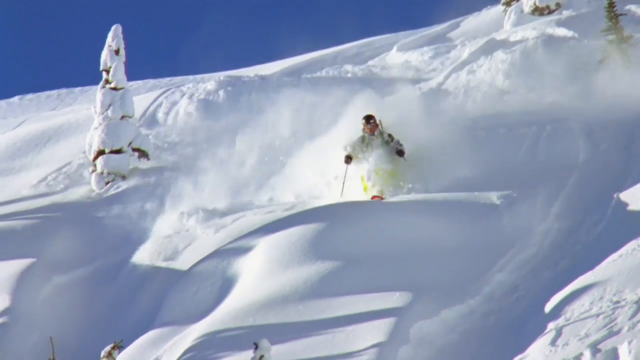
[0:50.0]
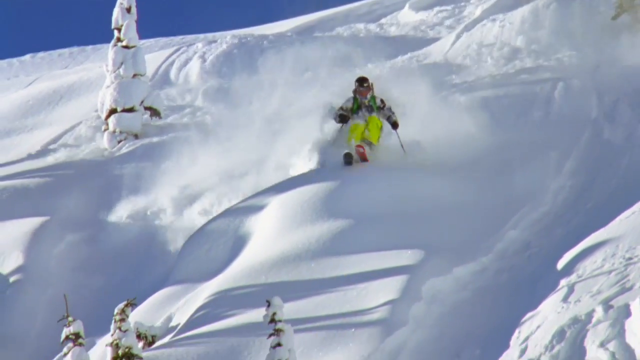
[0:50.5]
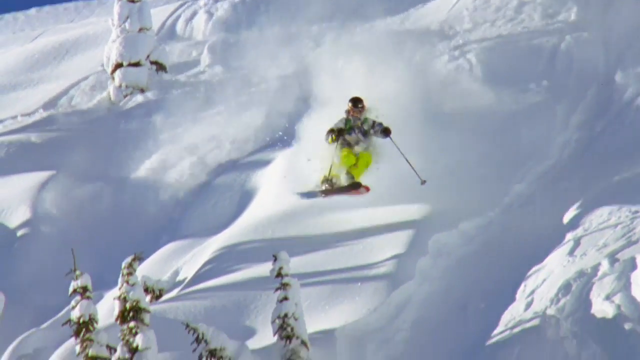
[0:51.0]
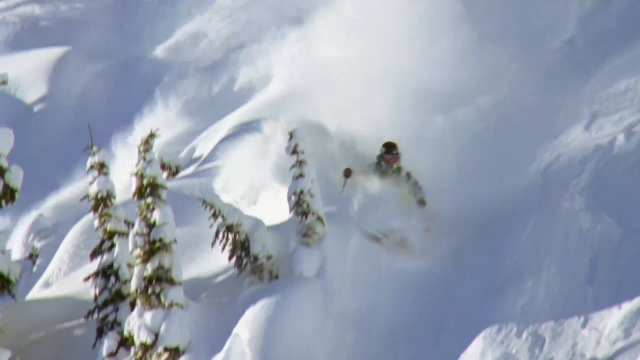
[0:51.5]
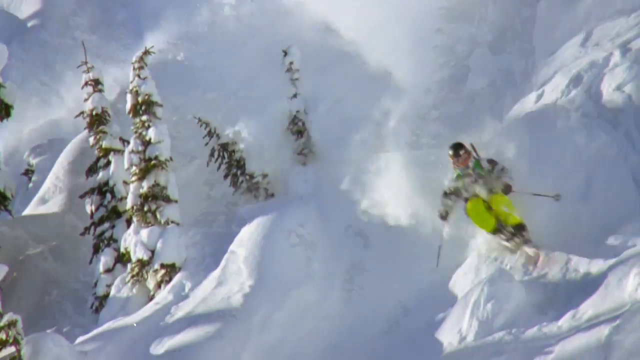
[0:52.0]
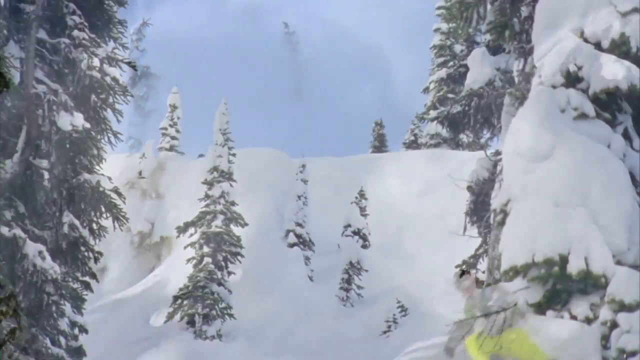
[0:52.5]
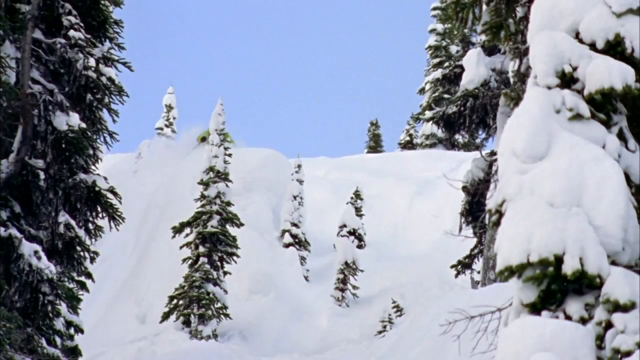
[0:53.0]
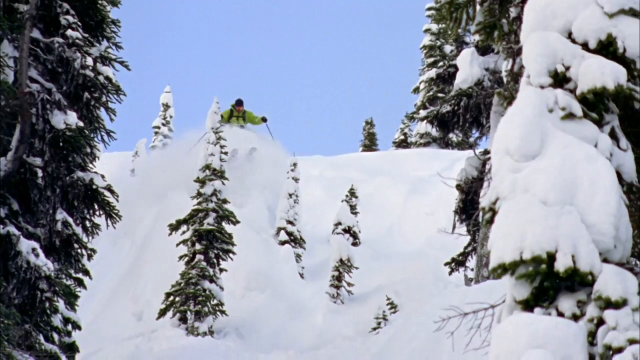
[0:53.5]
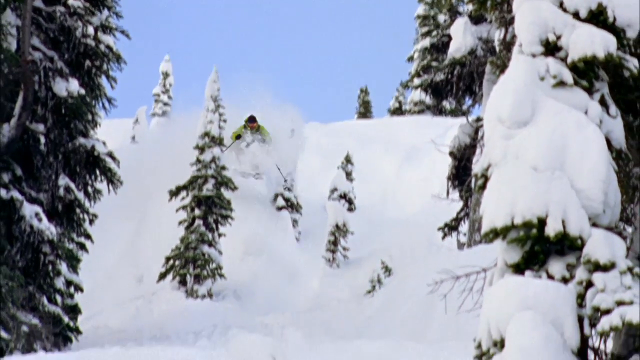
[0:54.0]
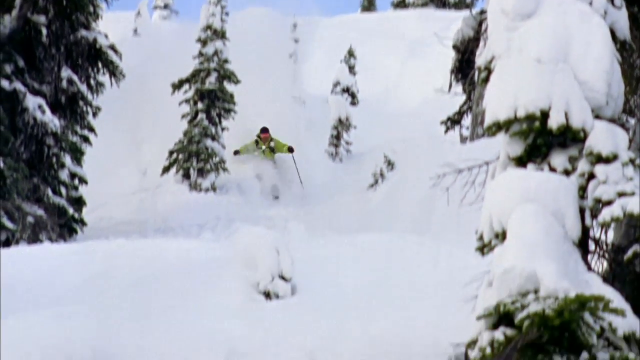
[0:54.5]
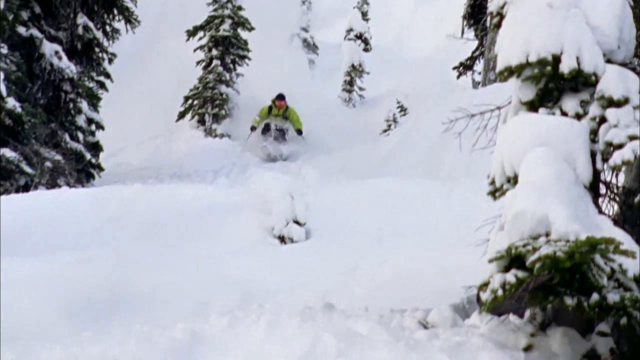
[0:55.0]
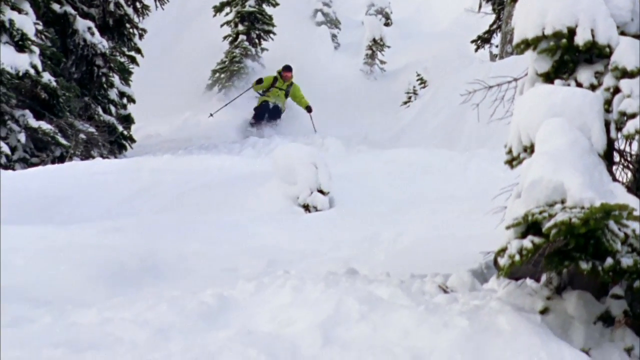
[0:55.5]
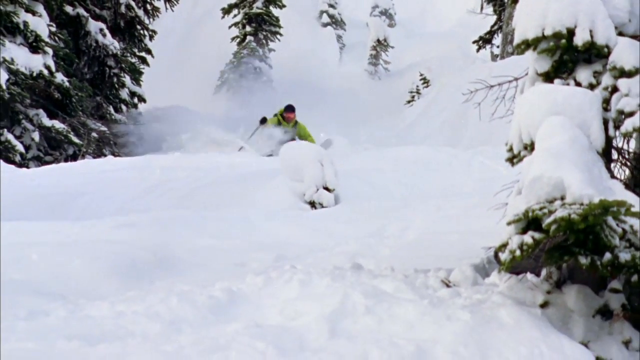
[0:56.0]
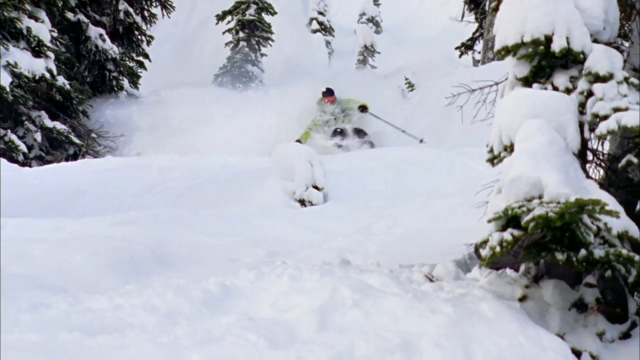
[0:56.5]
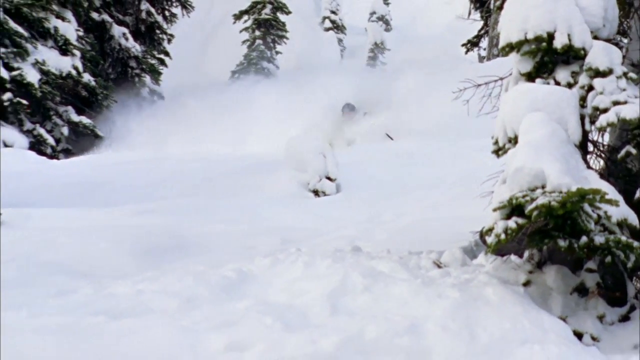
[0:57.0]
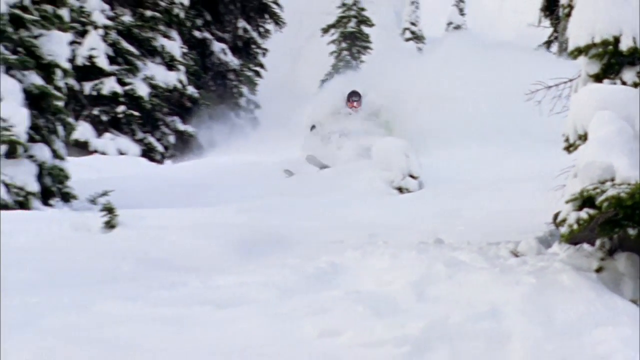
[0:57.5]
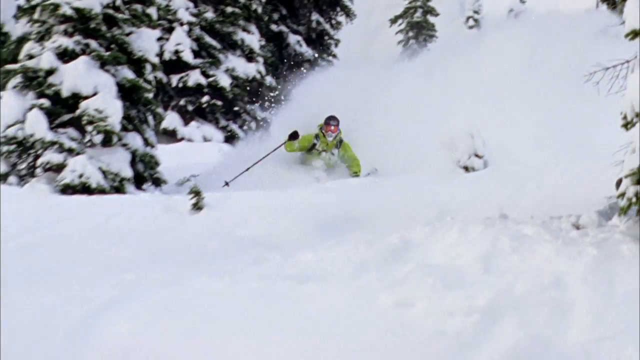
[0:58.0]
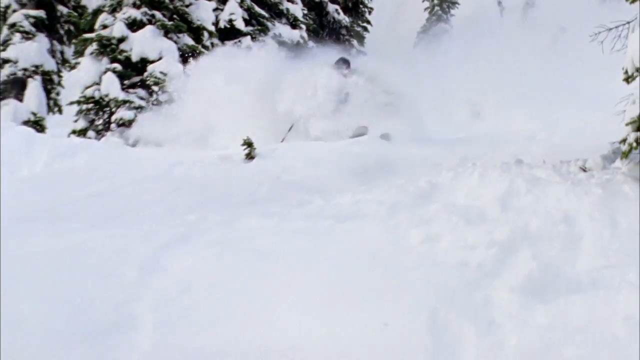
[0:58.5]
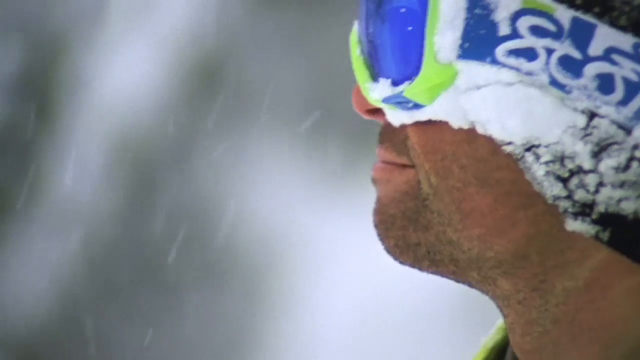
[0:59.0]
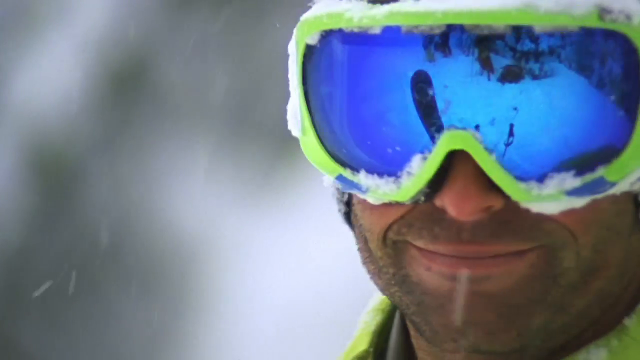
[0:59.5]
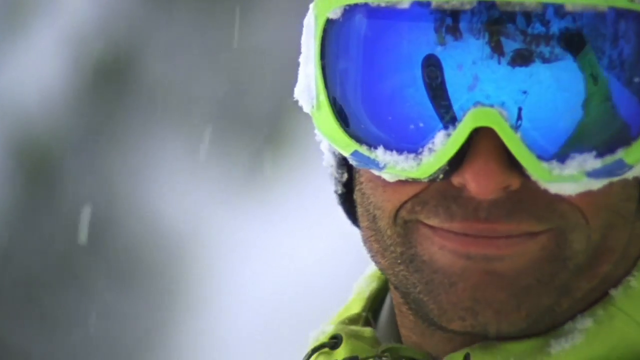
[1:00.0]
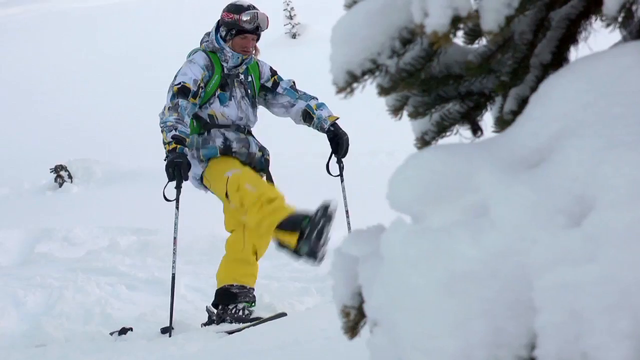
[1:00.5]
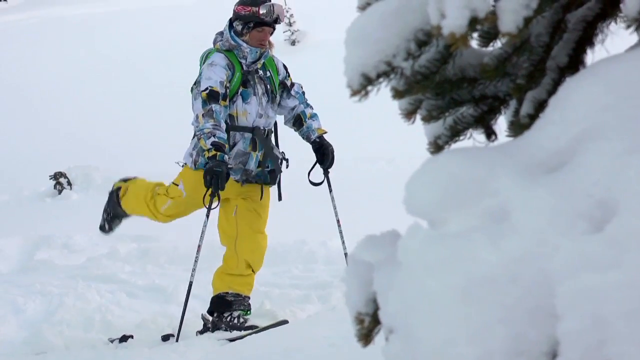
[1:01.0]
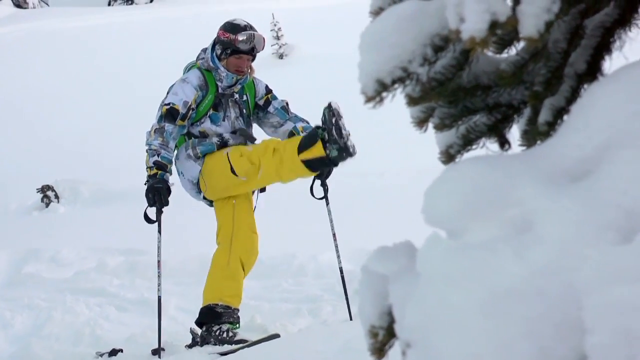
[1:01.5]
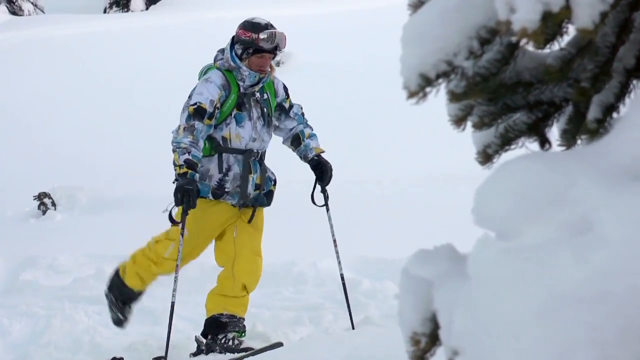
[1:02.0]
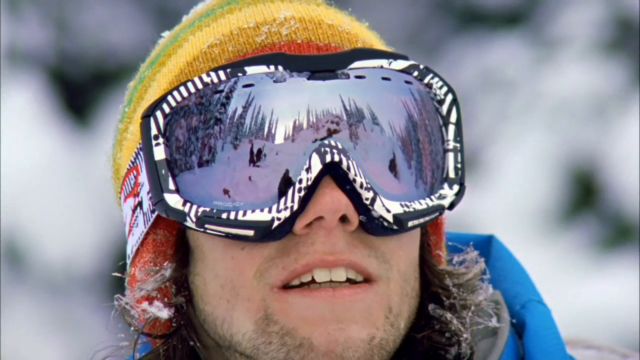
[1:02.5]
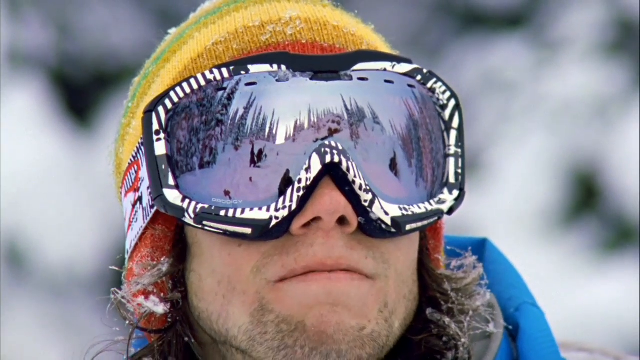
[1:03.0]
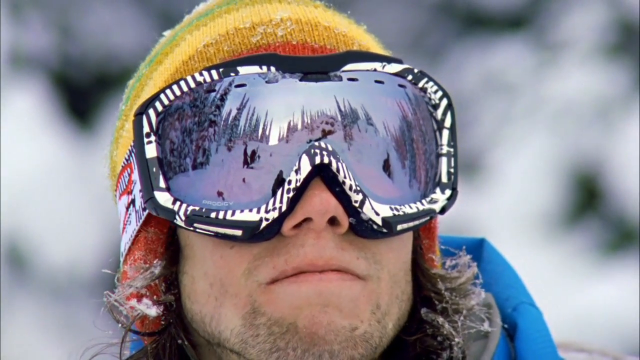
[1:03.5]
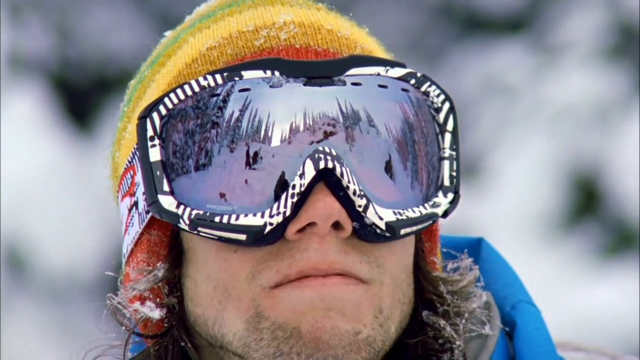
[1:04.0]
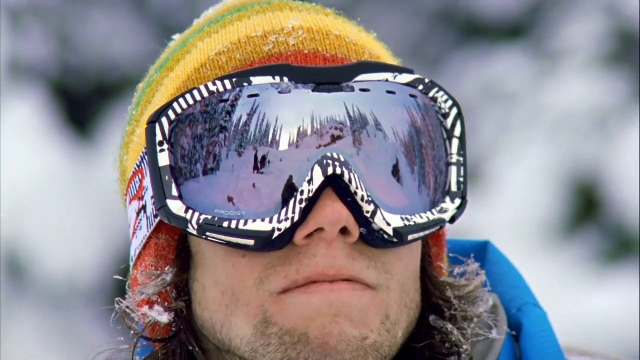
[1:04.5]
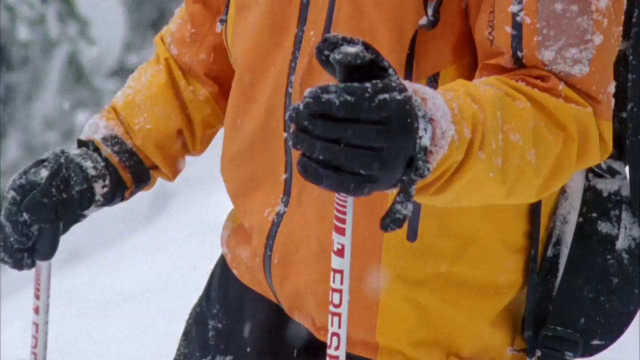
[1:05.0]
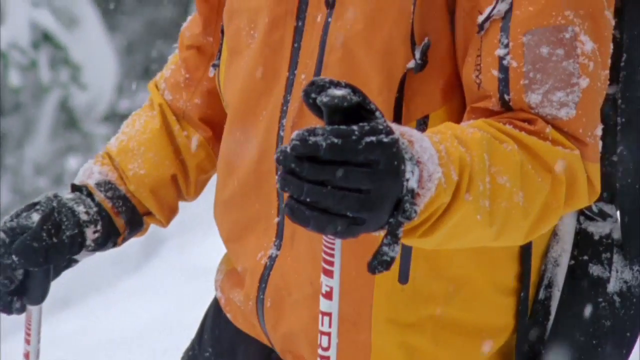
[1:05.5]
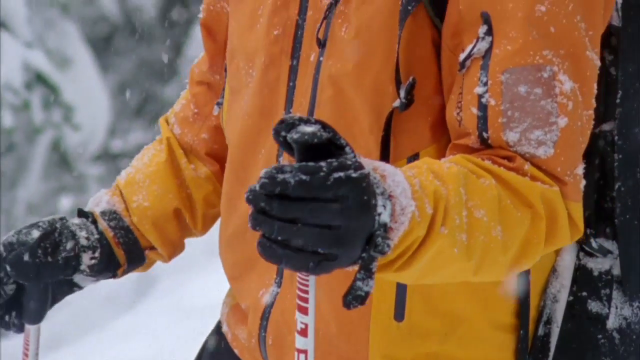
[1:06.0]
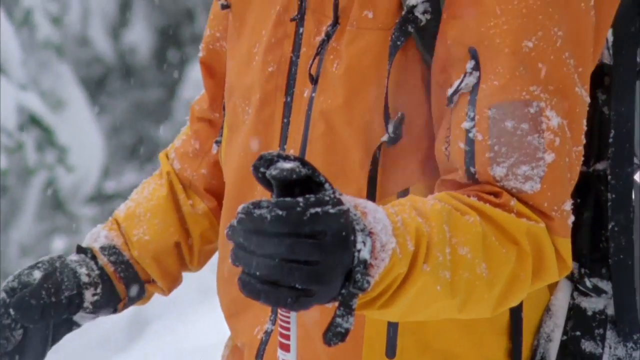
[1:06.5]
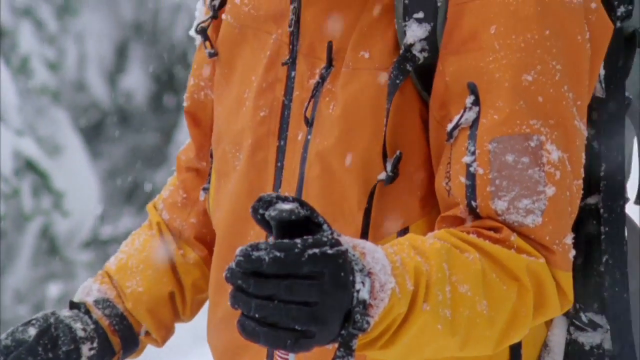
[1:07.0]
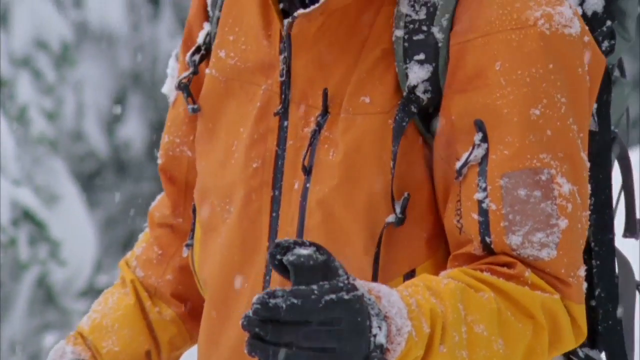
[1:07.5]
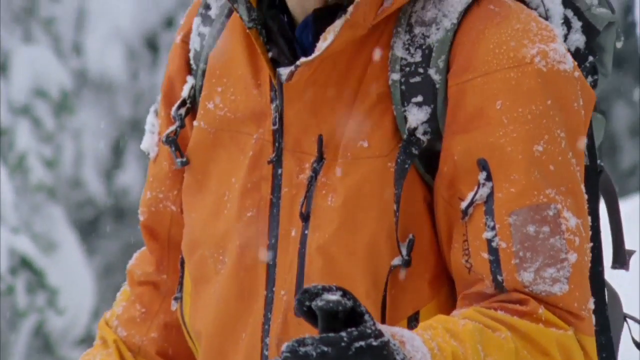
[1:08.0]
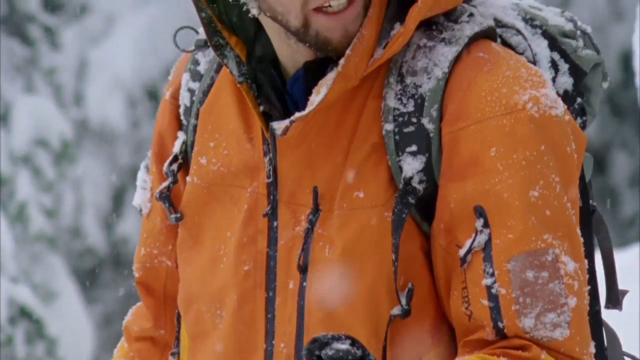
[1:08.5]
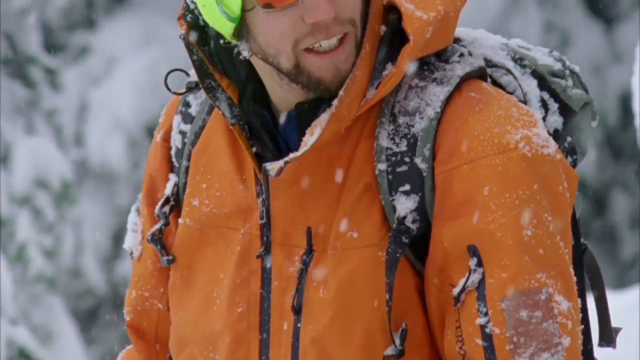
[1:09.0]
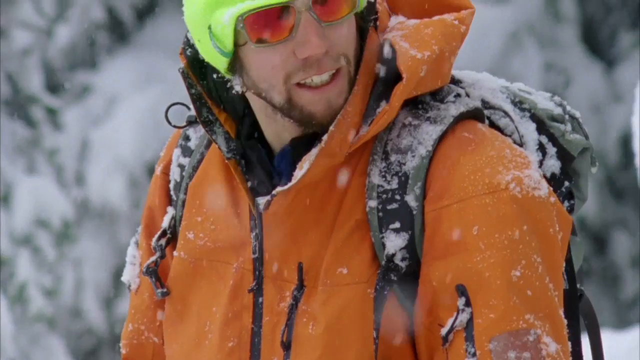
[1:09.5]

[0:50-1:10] A skier comes down the hill toward the person filming, jumping off little jumps and landing, while behind them snow rolls down the hill. Next, a skier goes down another slope from left to right toward the camera, kicking up snow. Then a close-up shows one of the skiers wearing a blue visor with a neon green outline: a Caucasian man, maybe in his 30s or late 30s, who smiles and looks to his left directly at the camera. Another skier stands still, swinging his right leg forward and backward, apparently warming up, holding himself up with a ski stick in each hand. Next, what looks like a Caucasian man in his 20s looks upward and somewhat toward the camera but a little to its left; his visor reflects what is in front of him, and his mouth is open a little before he closes it. Then one of the skiers stands still in an orange jacket and black gloves, holding on to his ski sticks, as the camera slowly moves from the bottom upward; he looks to his left. He appears to be a Caucasian man in his 20s with brown facial hair, either dark orange or red glasses, and a neon green beanie on his head.